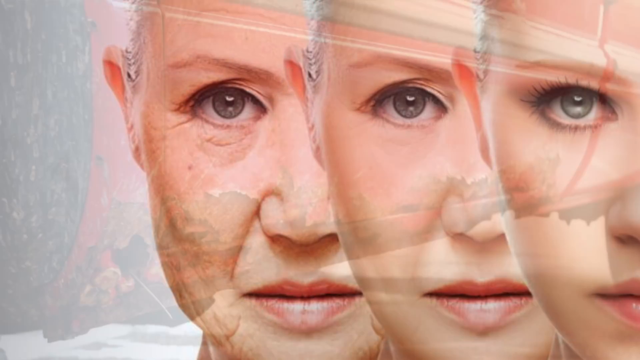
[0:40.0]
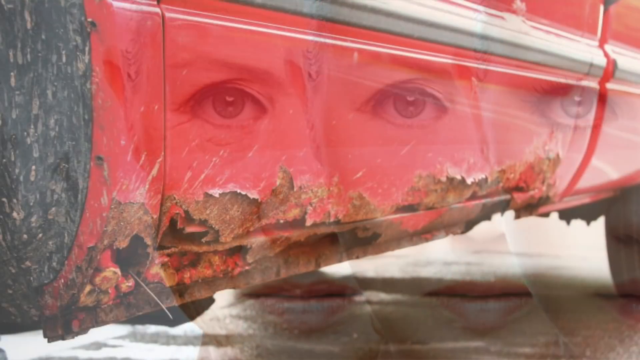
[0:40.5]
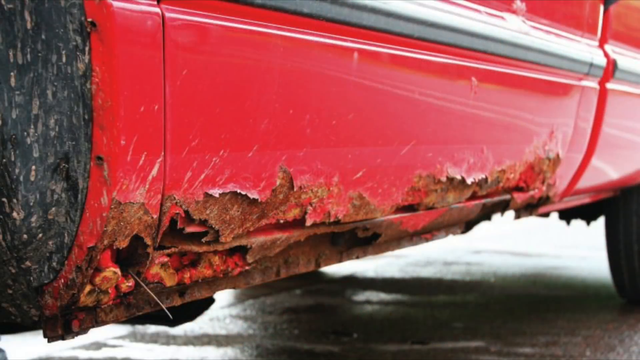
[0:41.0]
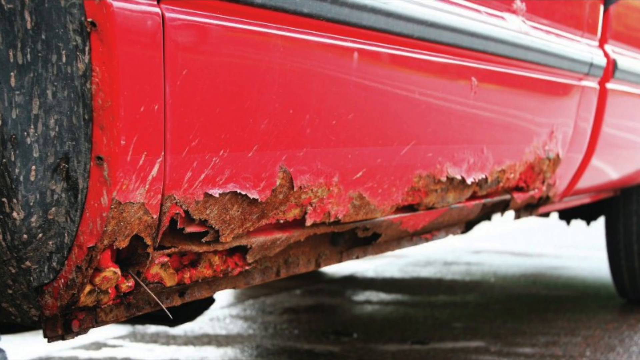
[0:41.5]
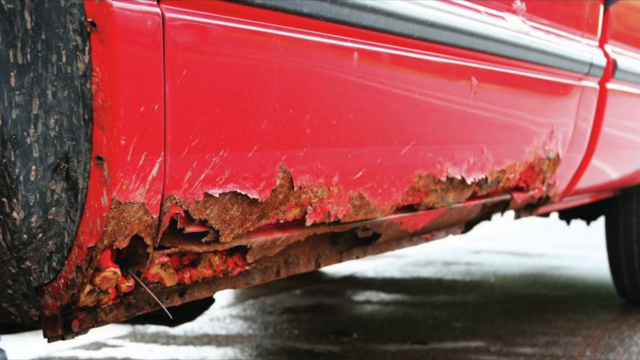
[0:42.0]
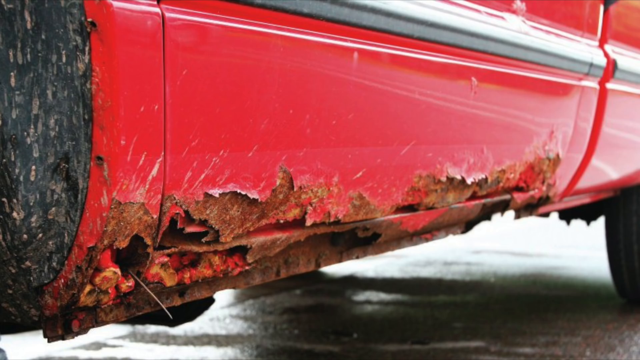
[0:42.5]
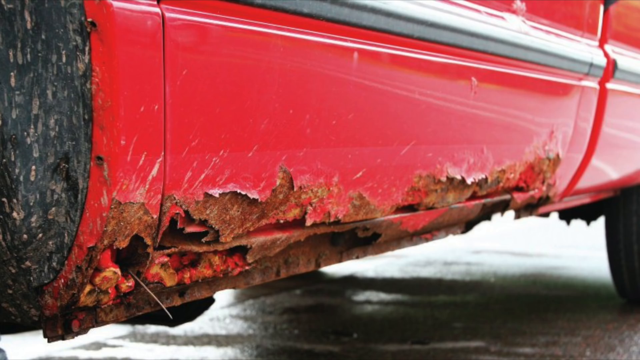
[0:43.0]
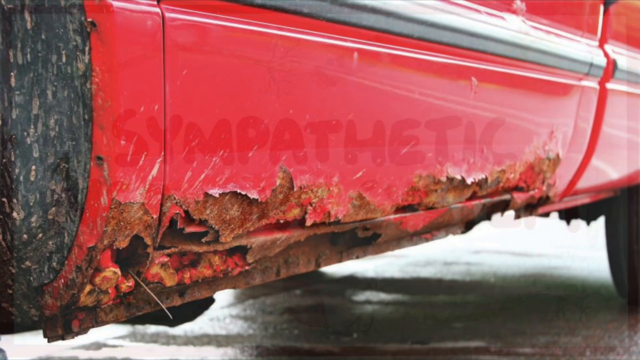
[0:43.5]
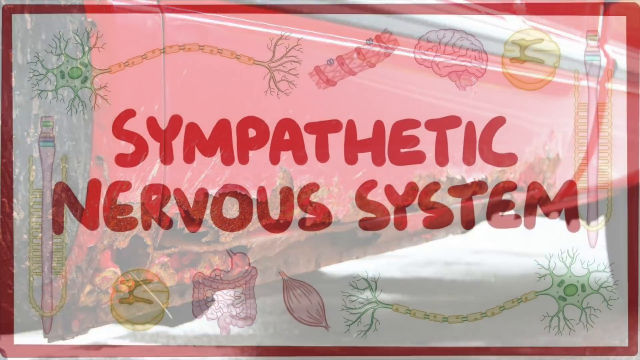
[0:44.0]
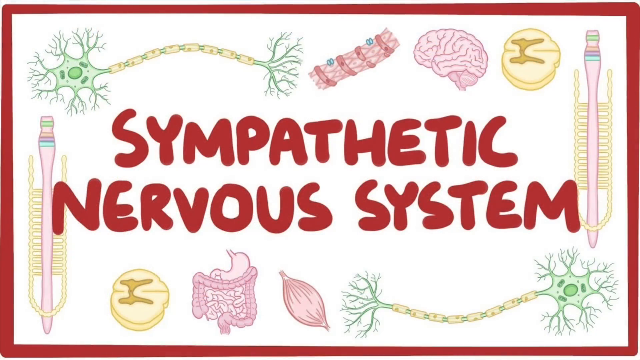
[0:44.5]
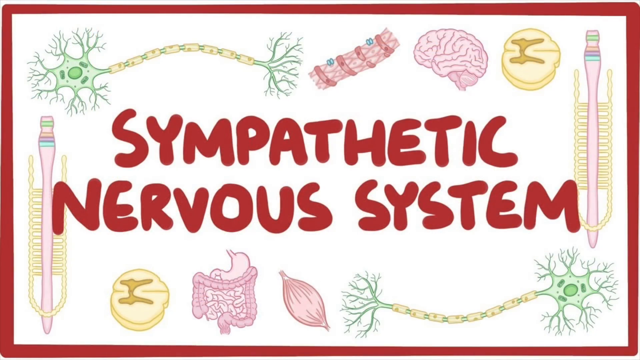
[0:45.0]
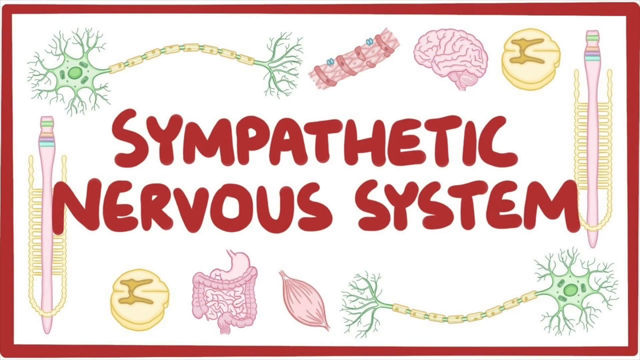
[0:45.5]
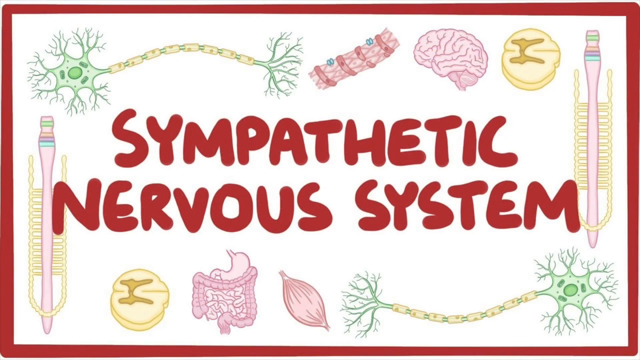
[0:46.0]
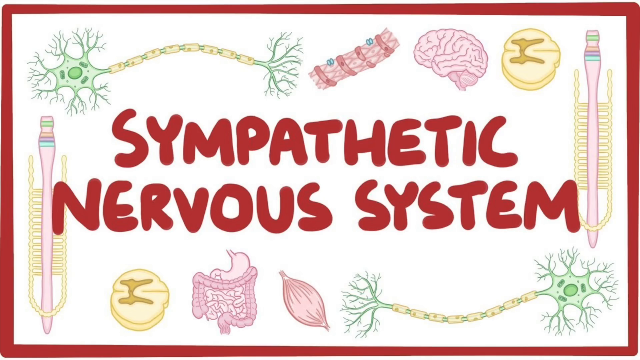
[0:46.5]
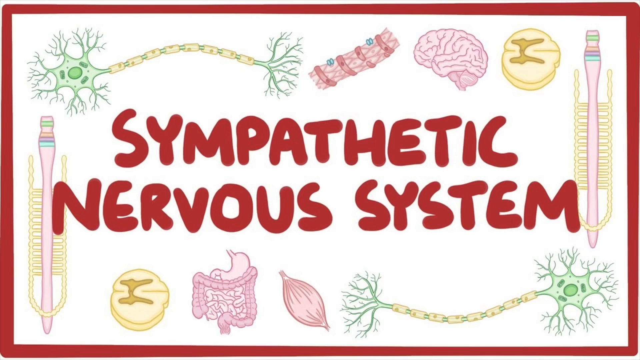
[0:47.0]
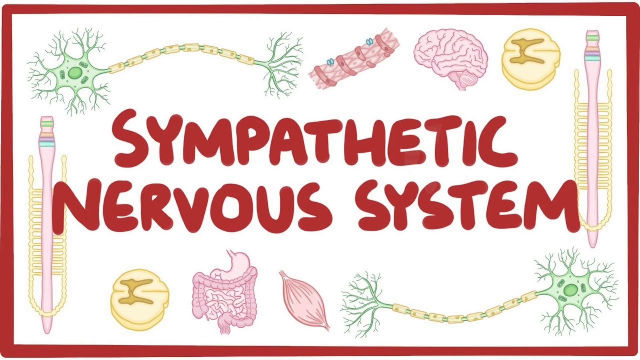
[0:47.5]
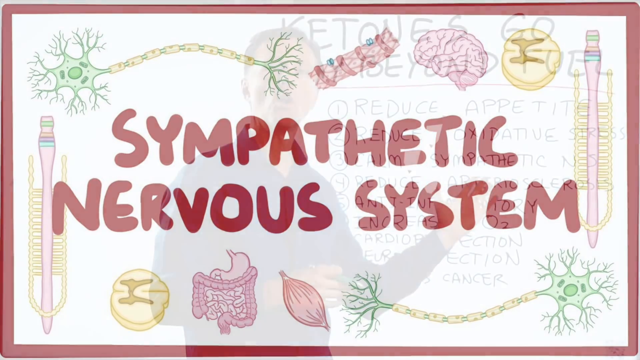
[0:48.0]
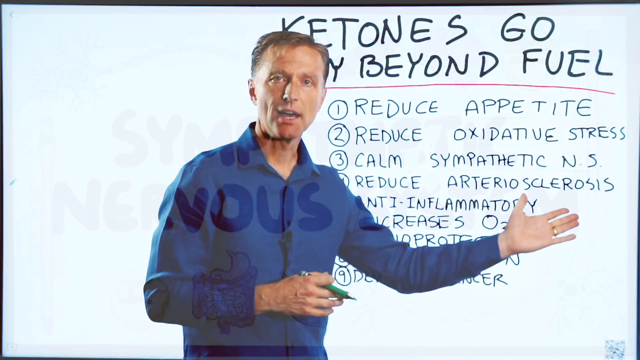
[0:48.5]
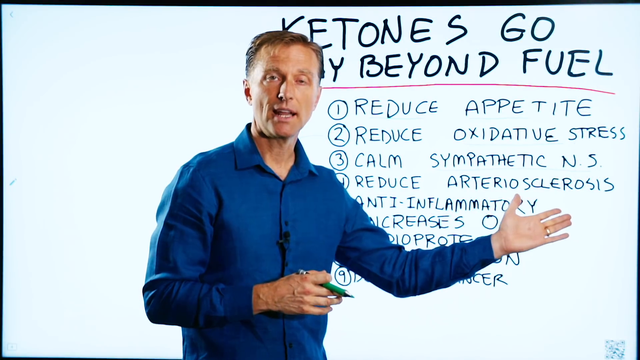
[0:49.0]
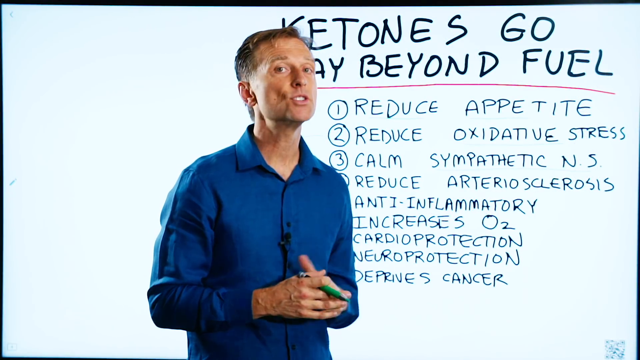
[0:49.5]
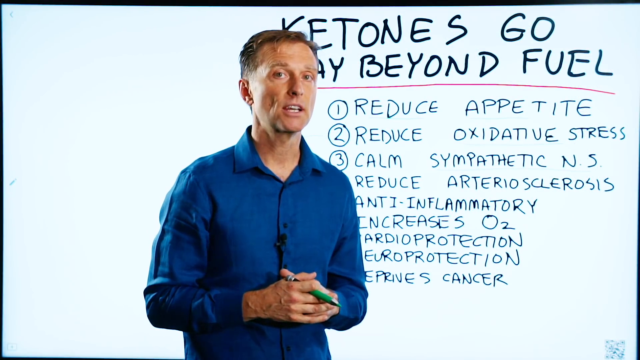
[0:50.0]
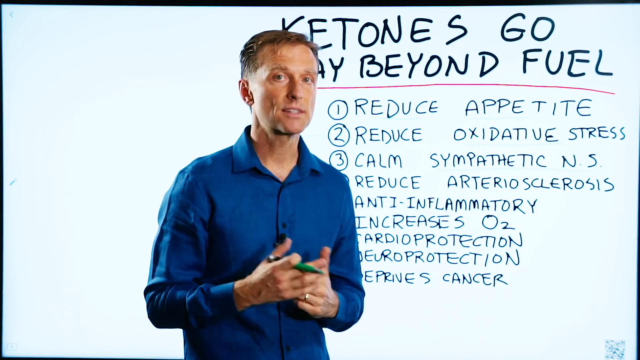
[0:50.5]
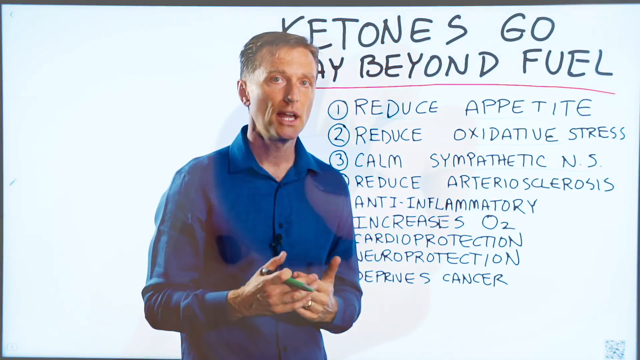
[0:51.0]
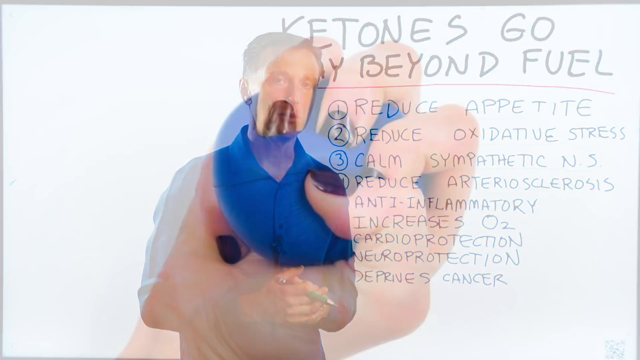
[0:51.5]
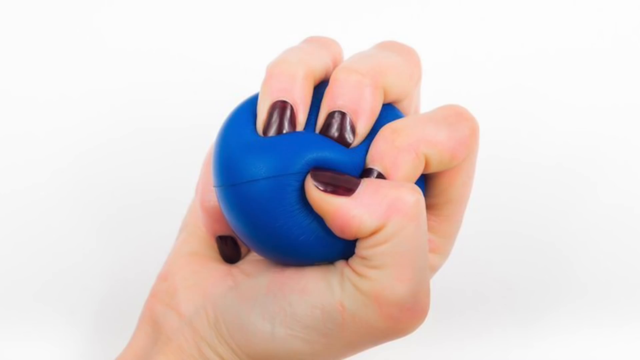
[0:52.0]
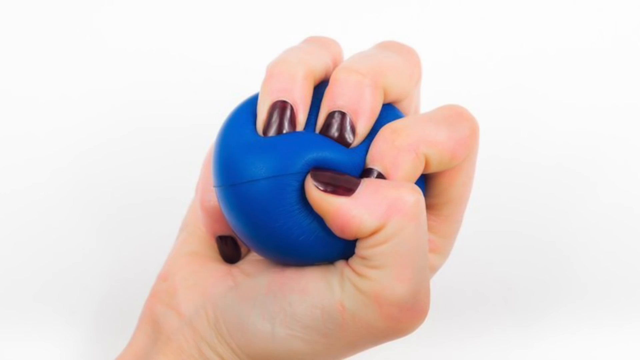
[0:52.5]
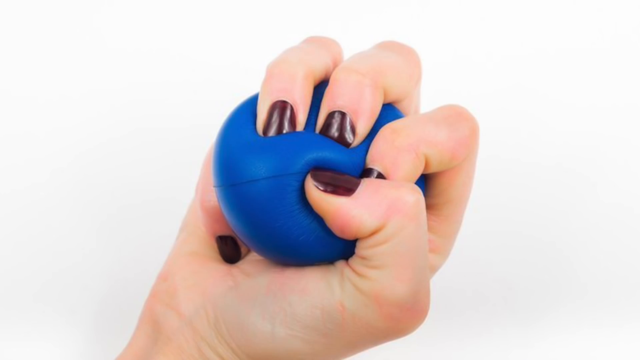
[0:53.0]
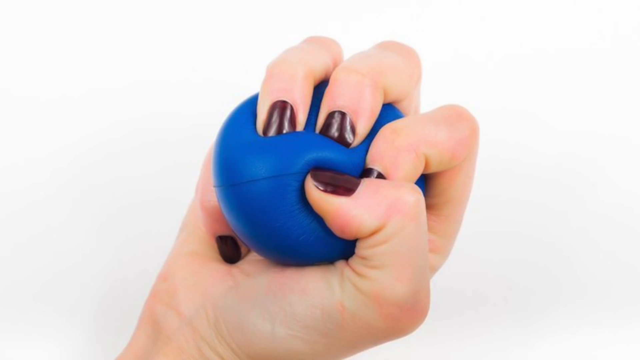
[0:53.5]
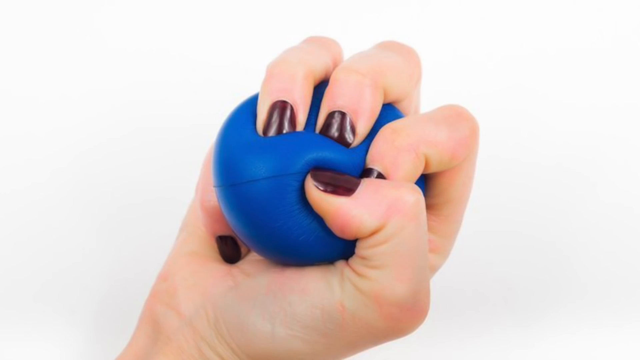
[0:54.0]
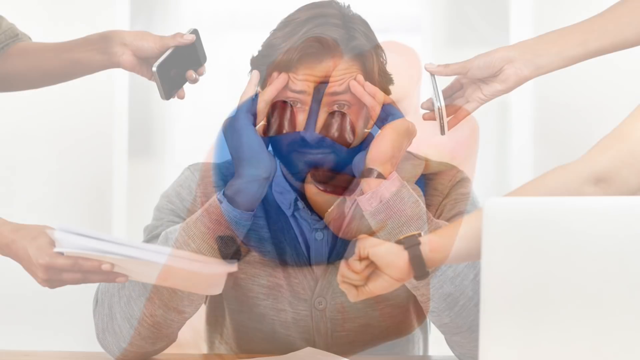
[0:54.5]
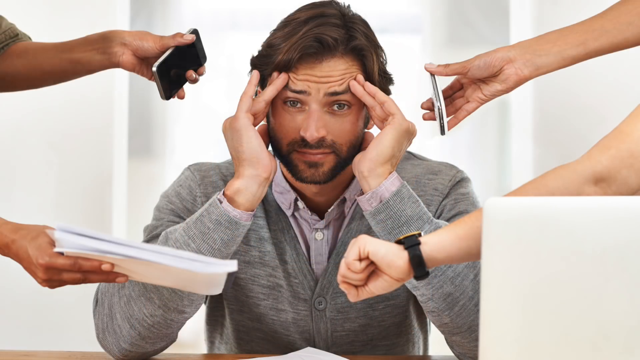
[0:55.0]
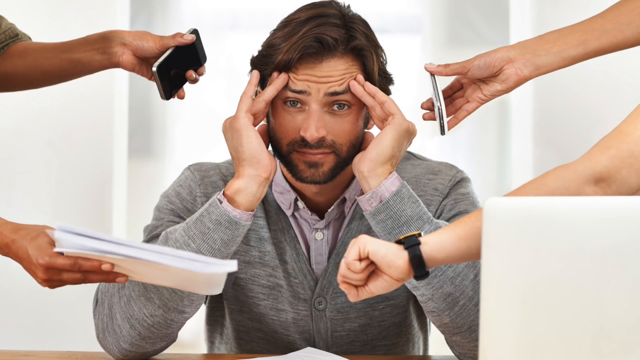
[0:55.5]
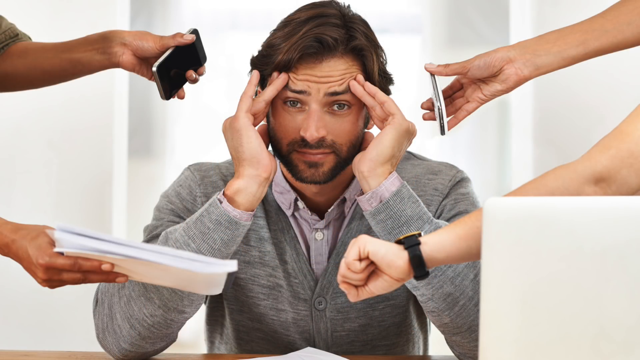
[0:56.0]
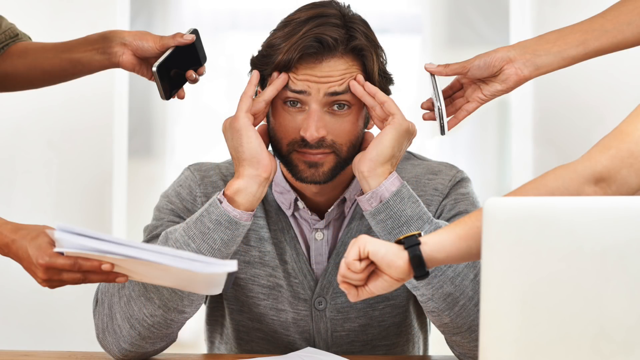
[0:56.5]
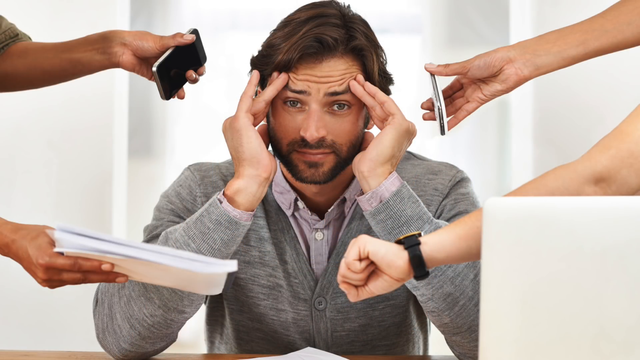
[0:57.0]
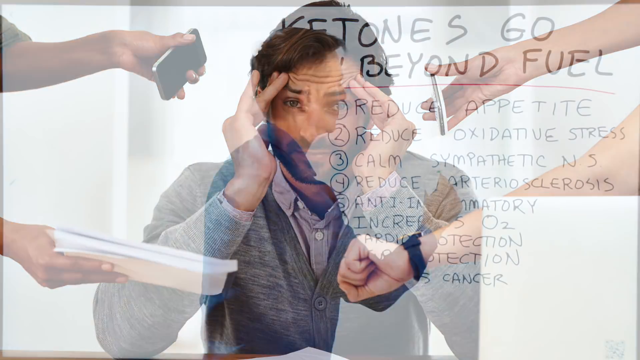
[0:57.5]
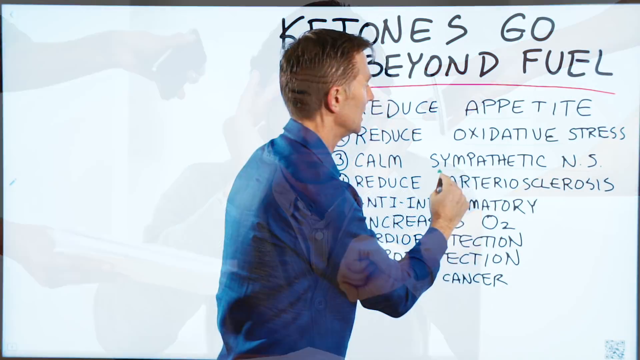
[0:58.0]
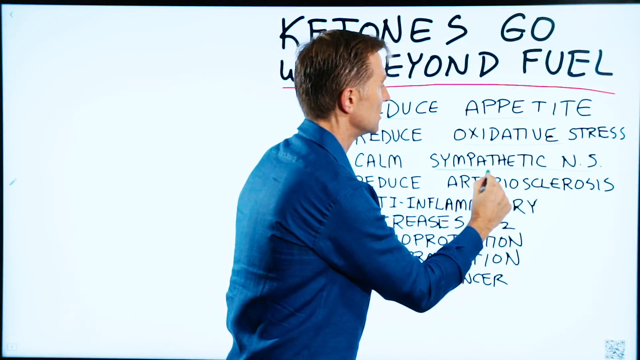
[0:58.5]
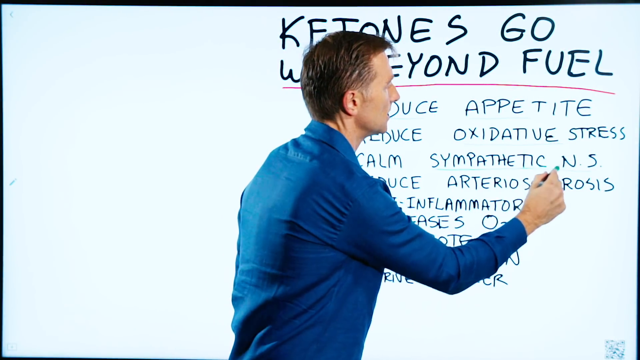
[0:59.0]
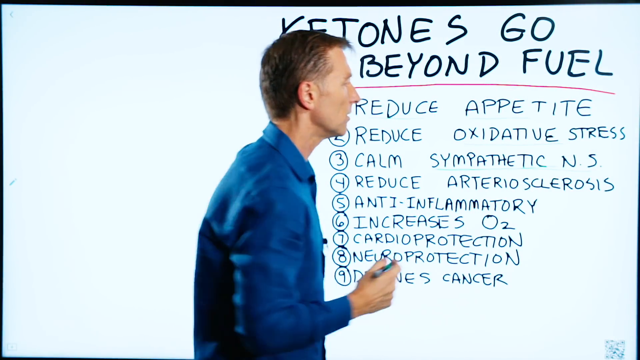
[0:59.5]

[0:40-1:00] The older woman appears for a brief second, and then the scene changes to what looks possibly like a red rusty car. The metal object is zoomed in on, and the door and the bottom have significant damage and wear and tear, with paint chipping and metal rusting. Next comes something that says "sympathetic nervous system", with images such as the brain and other parts of the body that are hard to identify. The video briefly returns to the man while he speaks, then shows a stock-looking image of a woman with black/brown painted nails squeezing what looks like a blue stress ball, a ball of some sort, in her right hand. A man who seems very overwhelmed and stressed out follows, with other people around him showing him a watch, maybe papers, and two cell phones shoved near his face. Then the male presenter reintroduces calm sympathetic nervous system.